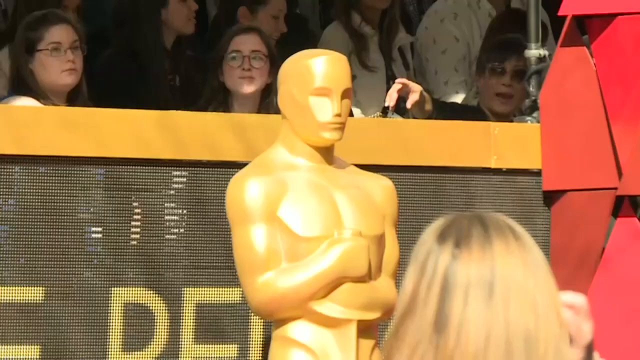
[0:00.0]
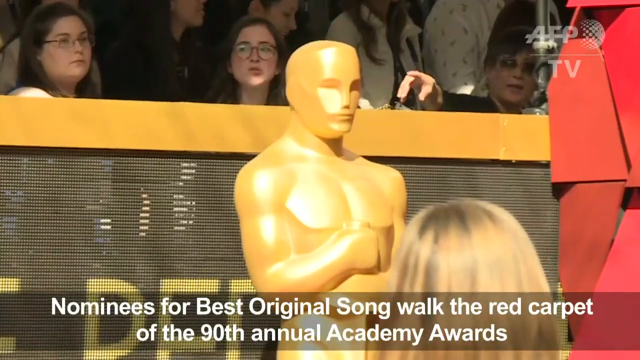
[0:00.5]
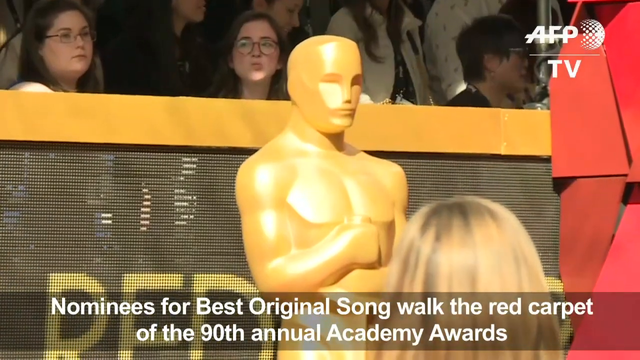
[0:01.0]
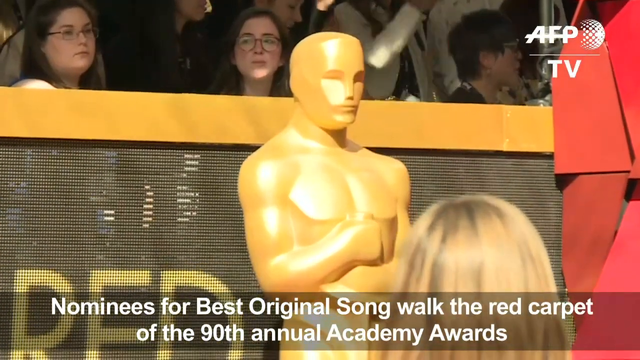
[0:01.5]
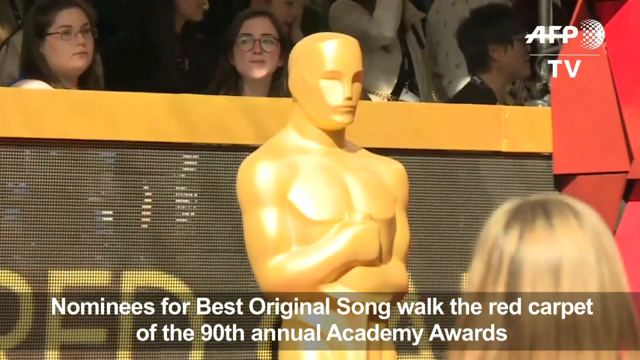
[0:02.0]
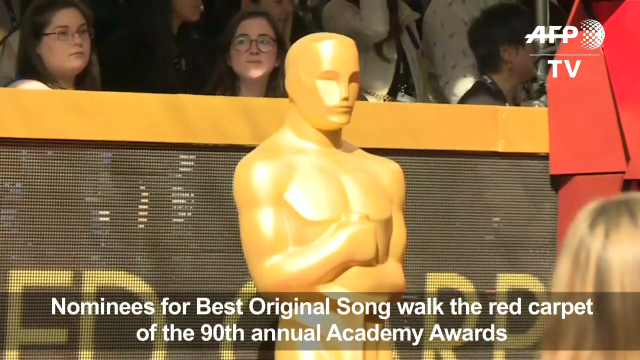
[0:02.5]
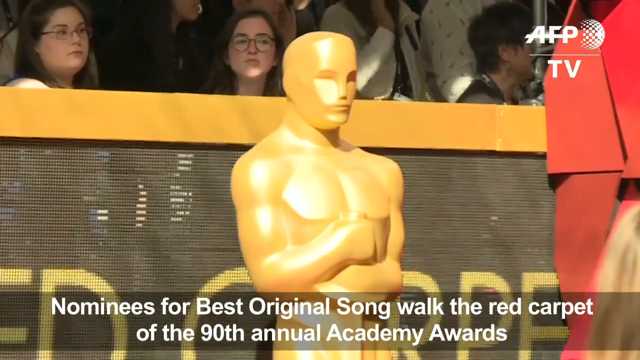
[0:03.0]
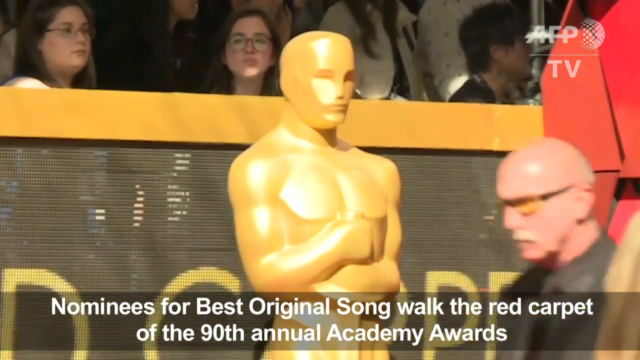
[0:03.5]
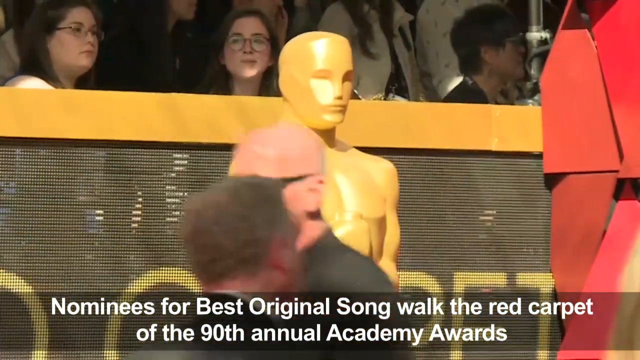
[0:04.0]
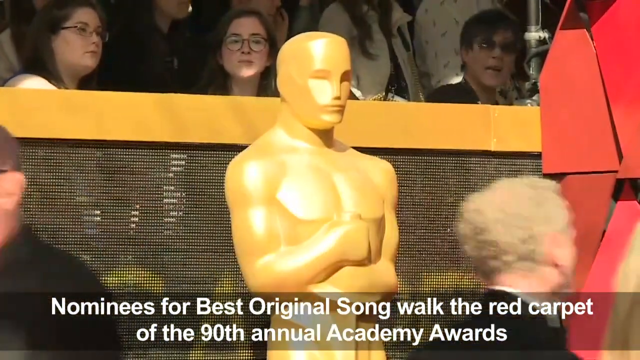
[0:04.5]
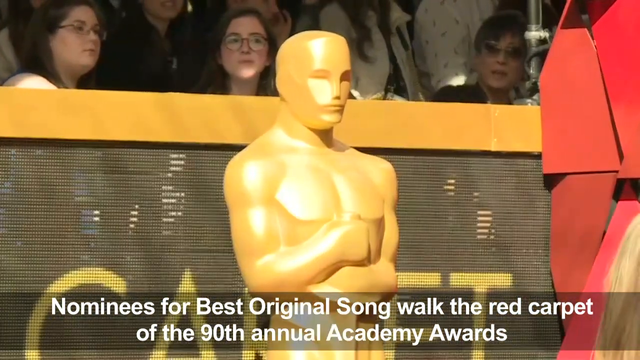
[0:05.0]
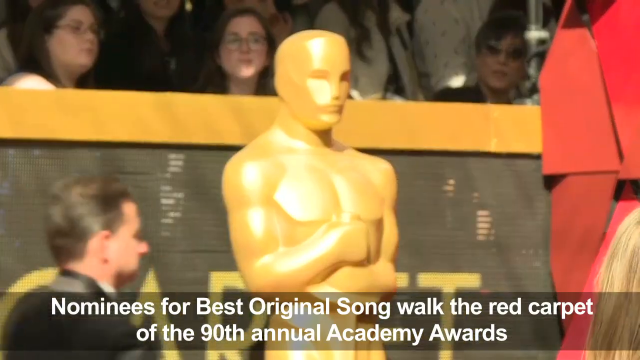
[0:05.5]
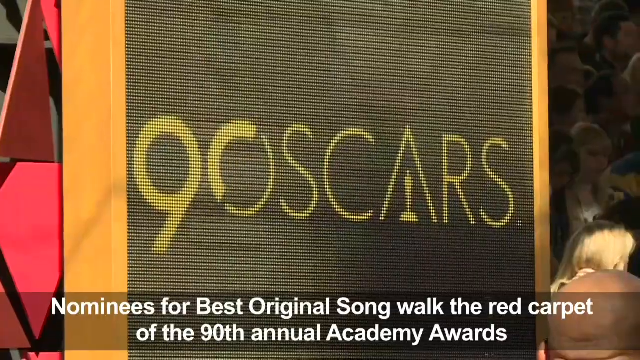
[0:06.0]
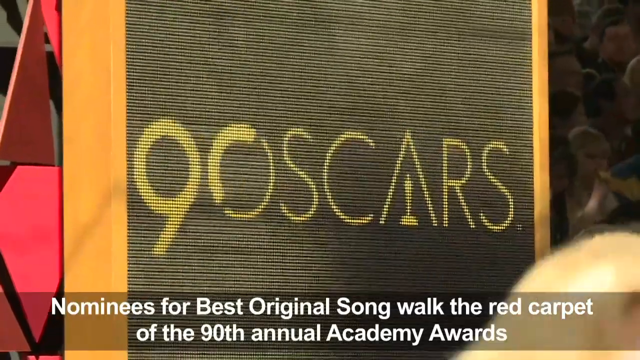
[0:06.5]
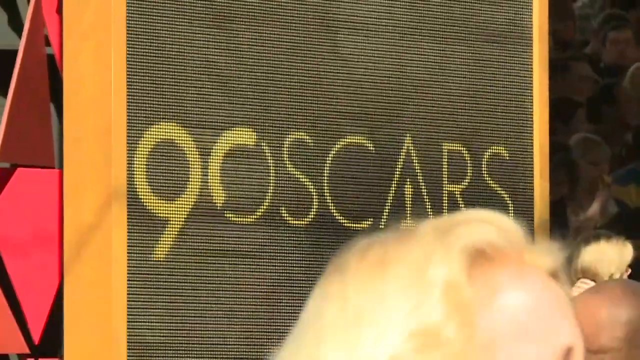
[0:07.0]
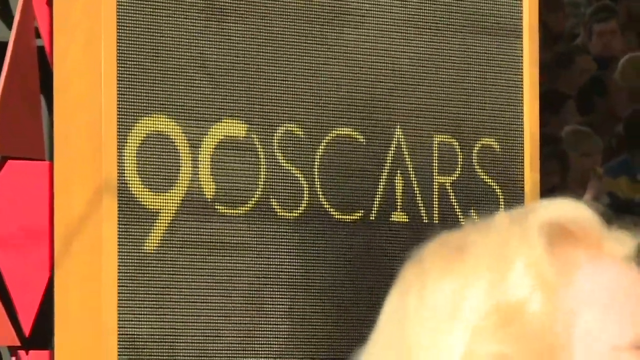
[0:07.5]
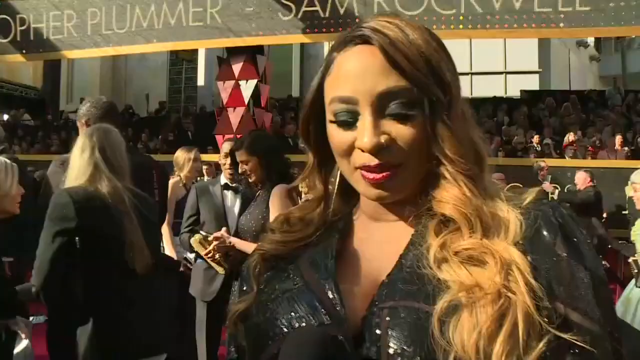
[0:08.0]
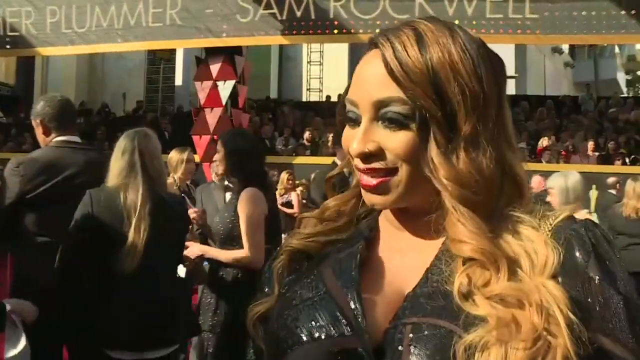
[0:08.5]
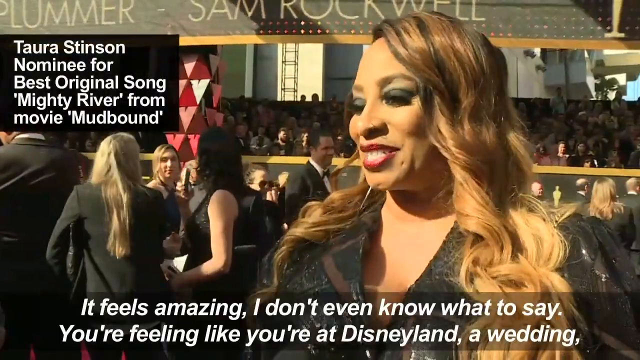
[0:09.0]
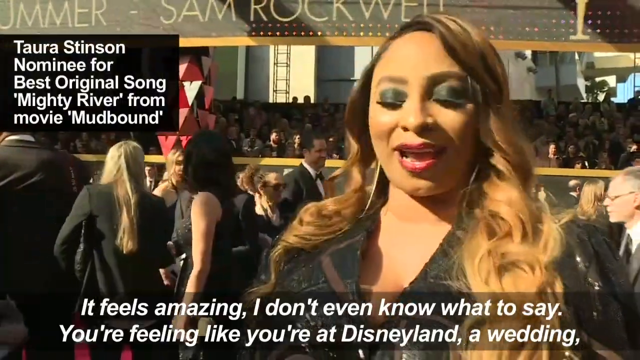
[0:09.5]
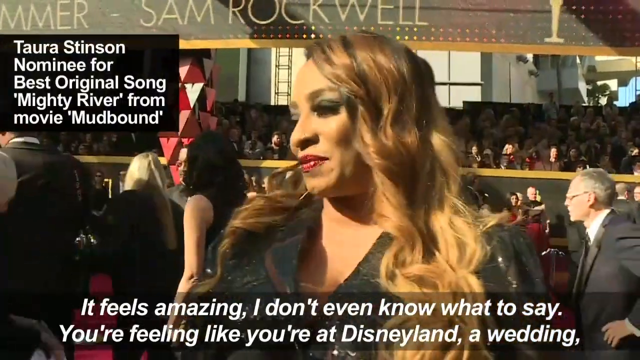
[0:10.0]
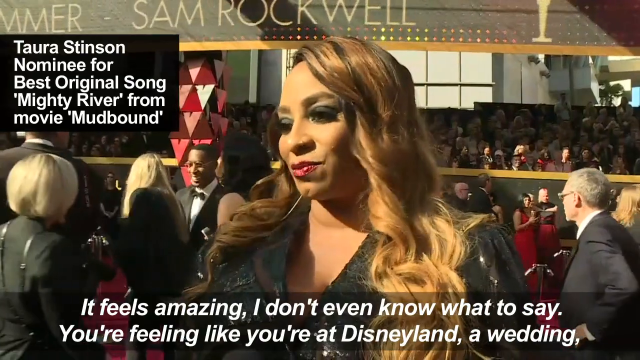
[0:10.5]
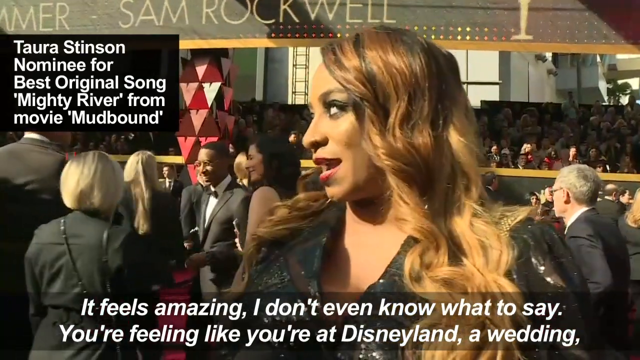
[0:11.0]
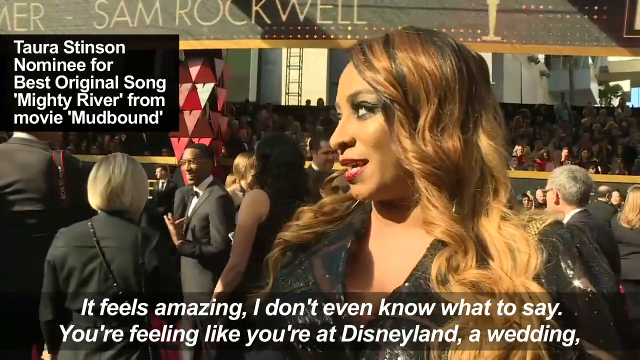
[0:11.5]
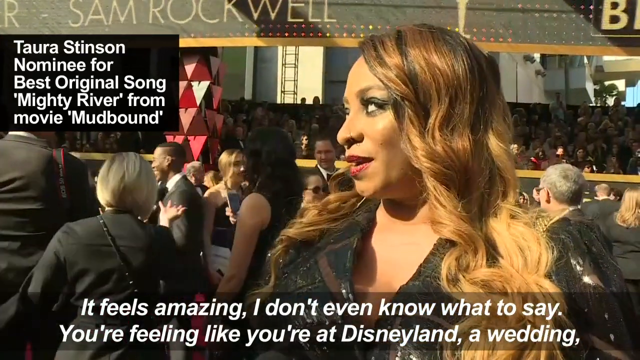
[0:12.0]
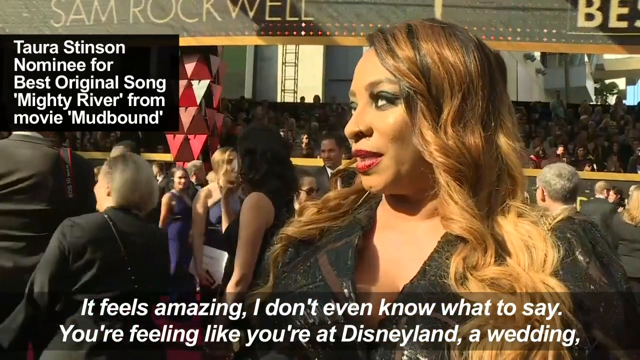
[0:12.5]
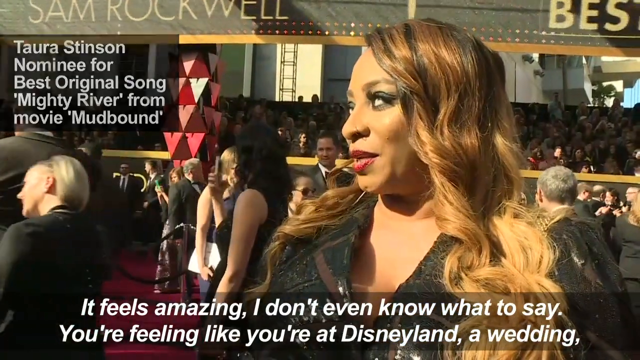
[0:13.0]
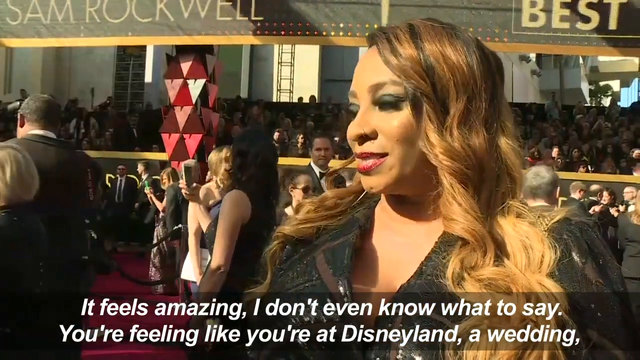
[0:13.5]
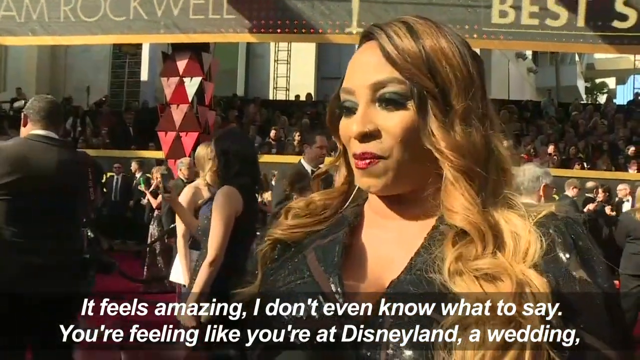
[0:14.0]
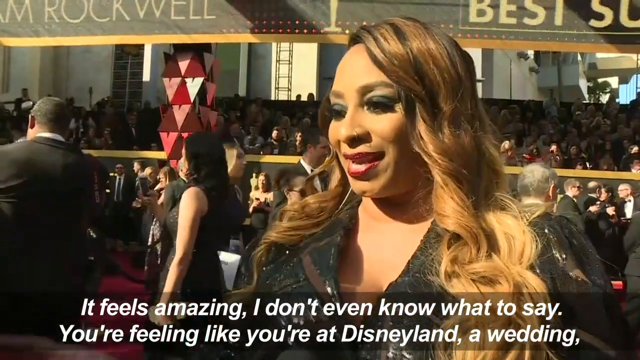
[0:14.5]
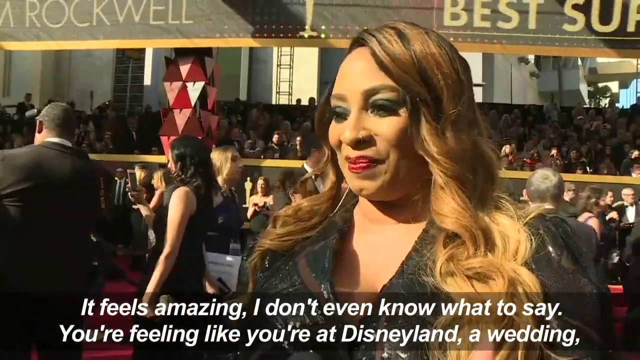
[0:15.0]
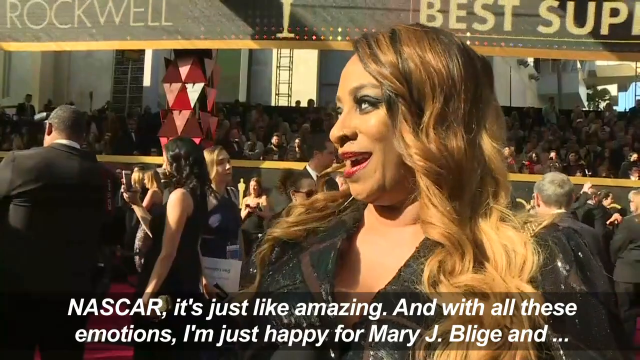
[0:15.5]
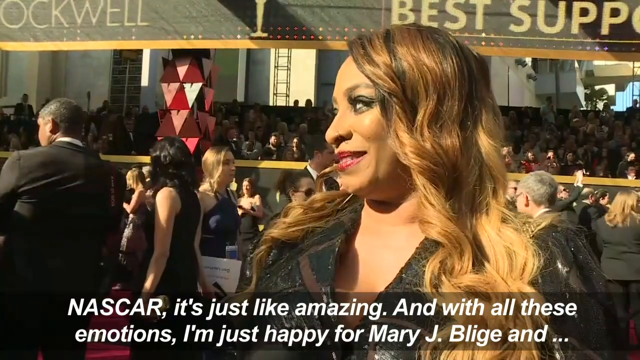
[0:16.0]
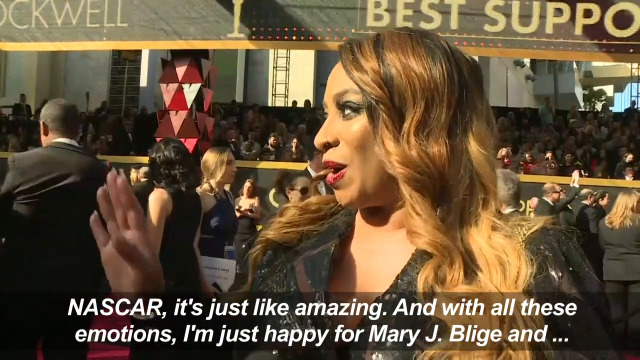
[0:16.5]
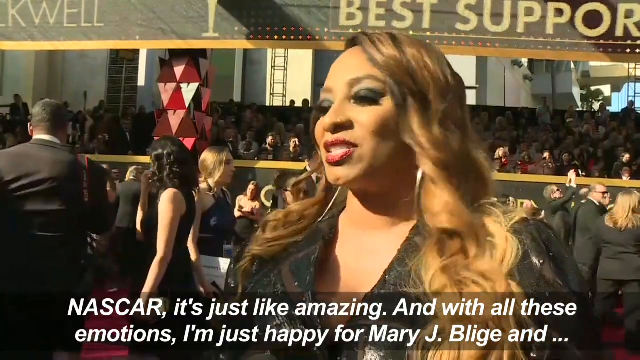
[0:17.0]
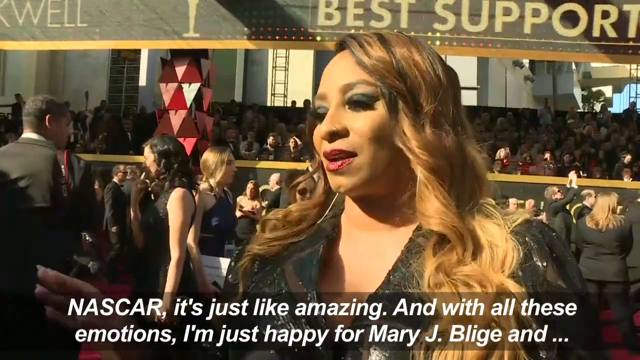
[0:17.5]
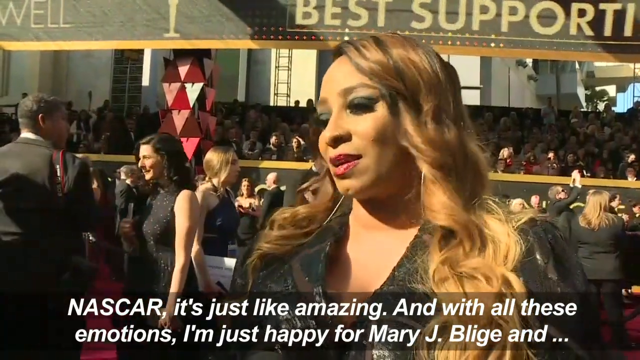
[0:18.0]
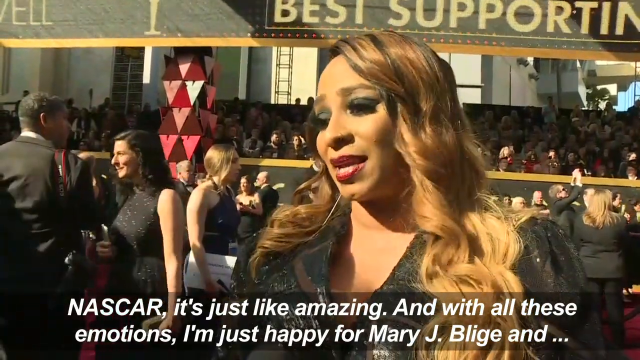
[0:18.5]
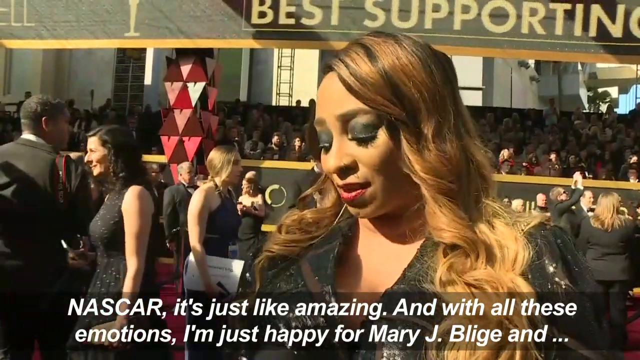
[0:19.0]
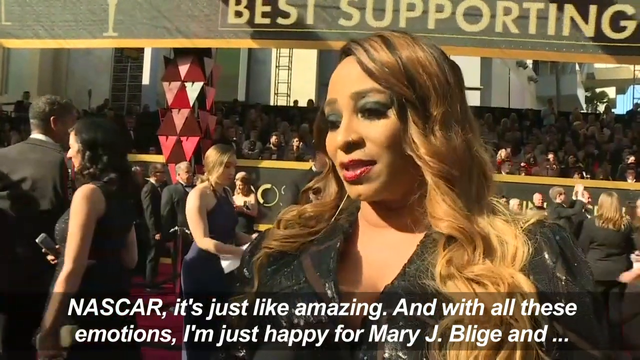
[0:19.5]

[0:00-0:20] What appears to be an event is shown, with on-screen text reading "nominees for best original song walk the red carpet of the 90th annual academy awards". A gold statue of a male figure is visible. Behind the statue there seems to be a barricade wall where people, possibly fans, are seated; from this angle two young women who are both wearing glasses can be seen there. People pass the statue. The scene changes to a wall with "nine oscars" written on it in yellow. The scene changes again to a woman named Taura Stinson, a nominee for best original song for Mighty River from the movie Mad Bound. Her words appear on the screen as she speaks: "it feels amazing, I don't even know what to say, you are feeling like you are at Disneyland, a wedding." She is a Black woman with brown and blonde hair, wearing a black dress, and behind her are many people all wearing formal clothes.